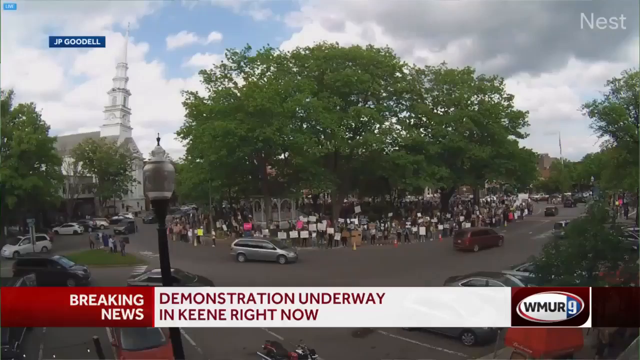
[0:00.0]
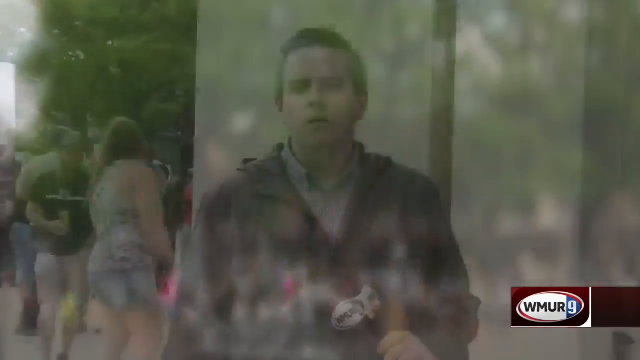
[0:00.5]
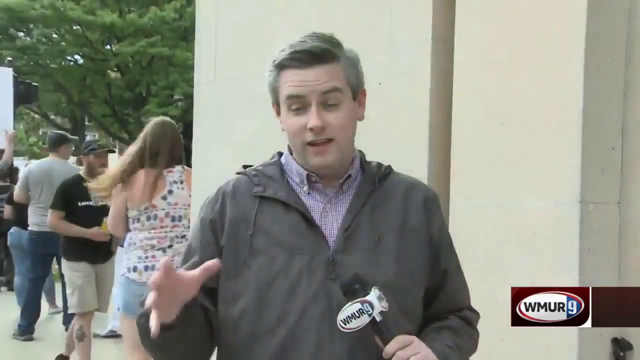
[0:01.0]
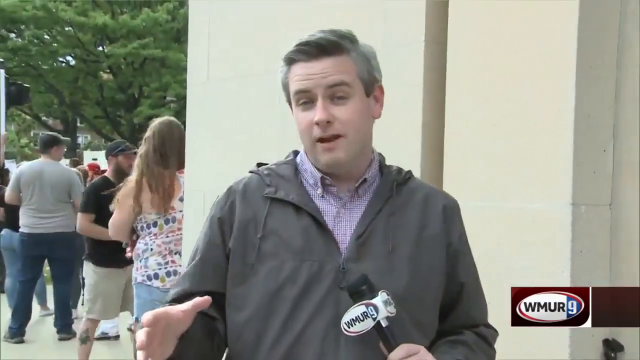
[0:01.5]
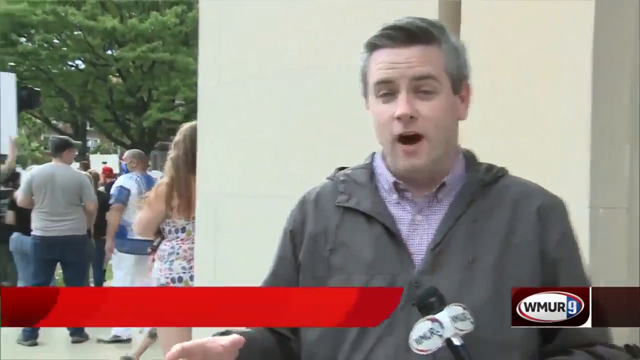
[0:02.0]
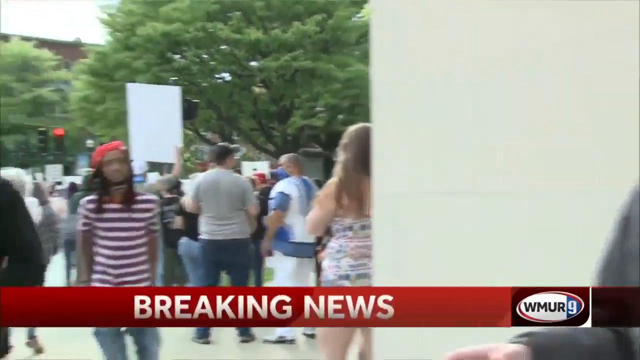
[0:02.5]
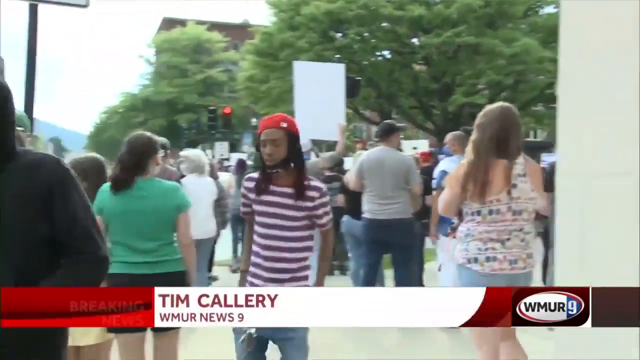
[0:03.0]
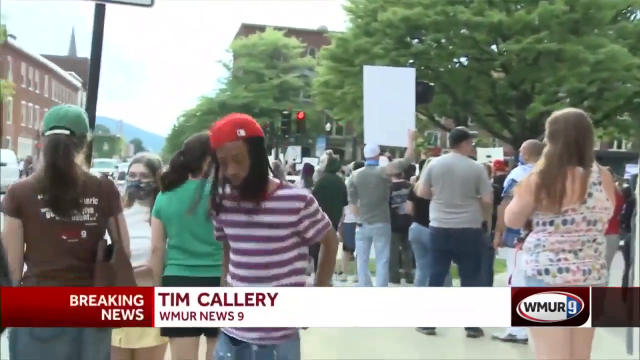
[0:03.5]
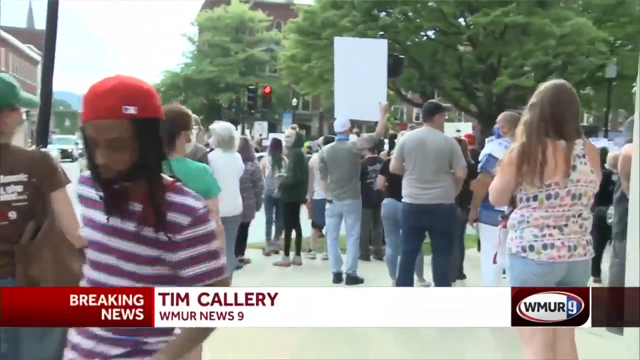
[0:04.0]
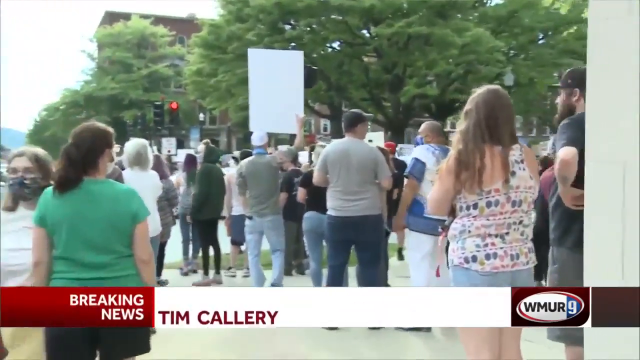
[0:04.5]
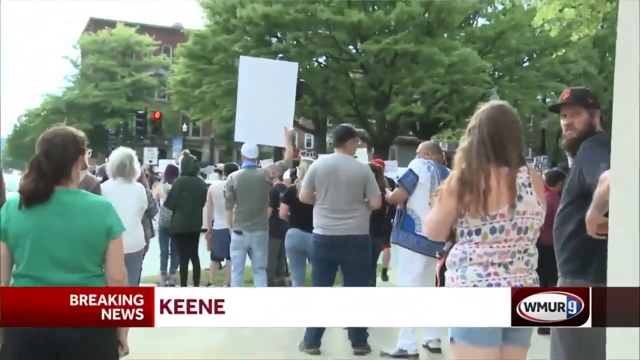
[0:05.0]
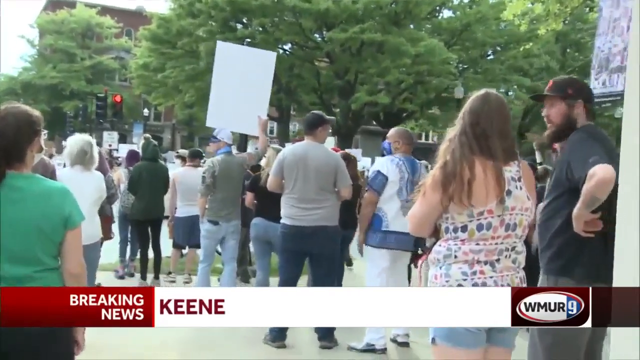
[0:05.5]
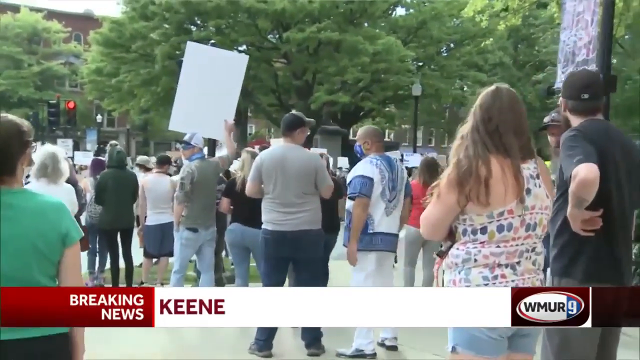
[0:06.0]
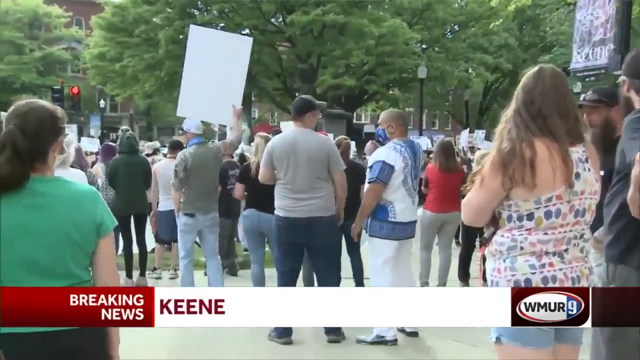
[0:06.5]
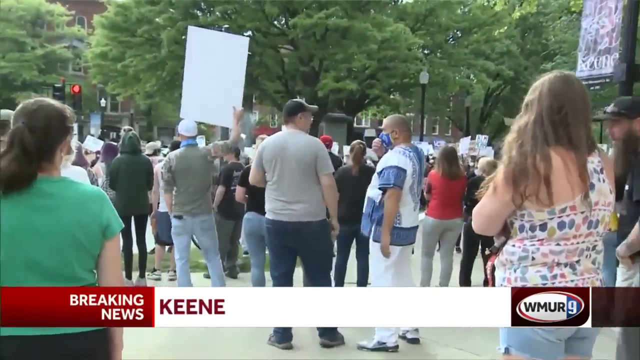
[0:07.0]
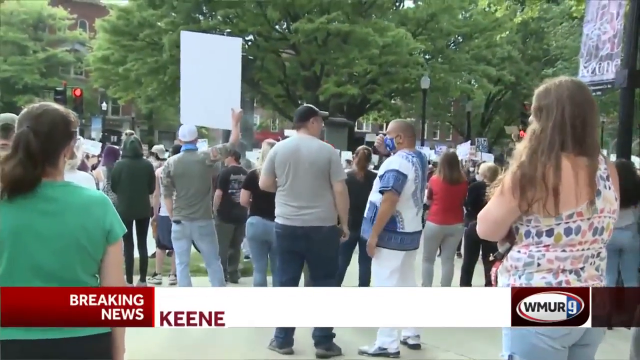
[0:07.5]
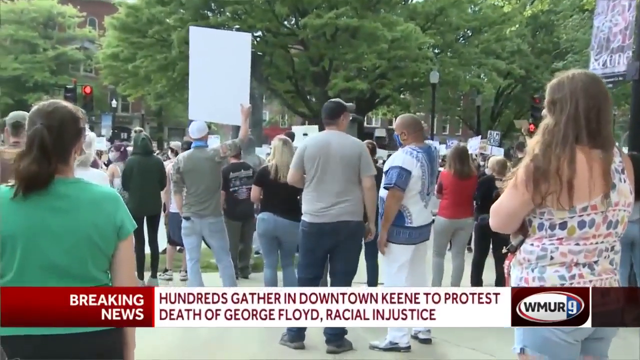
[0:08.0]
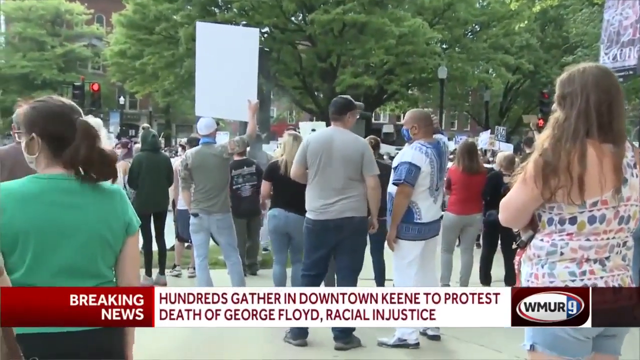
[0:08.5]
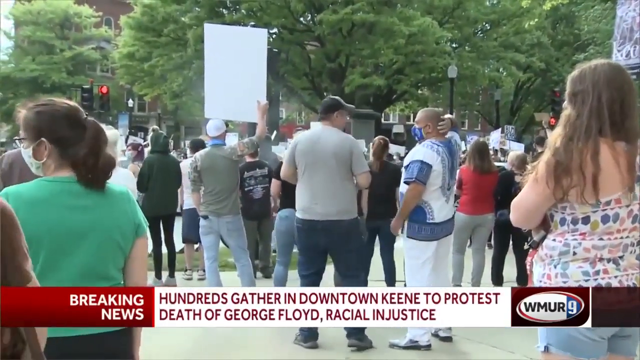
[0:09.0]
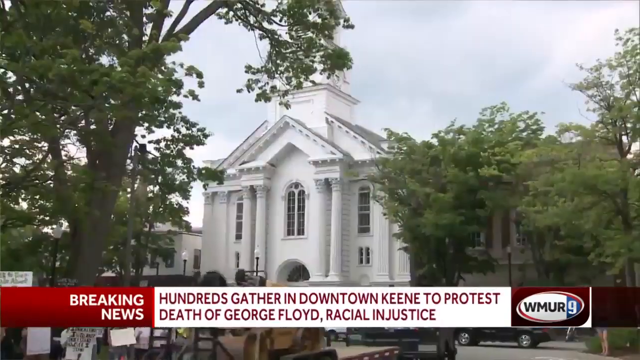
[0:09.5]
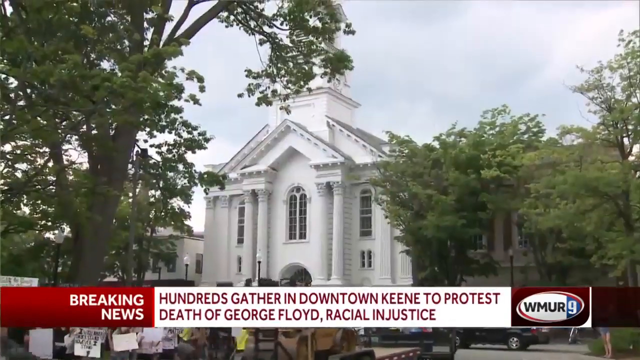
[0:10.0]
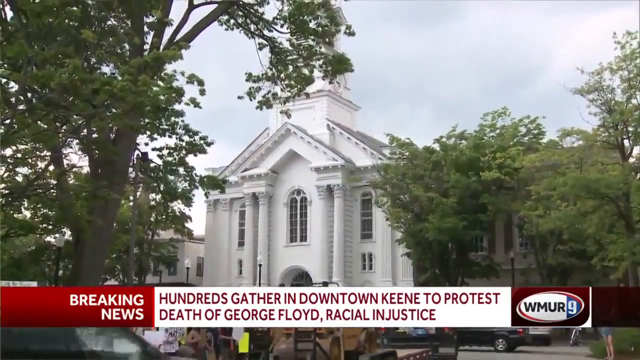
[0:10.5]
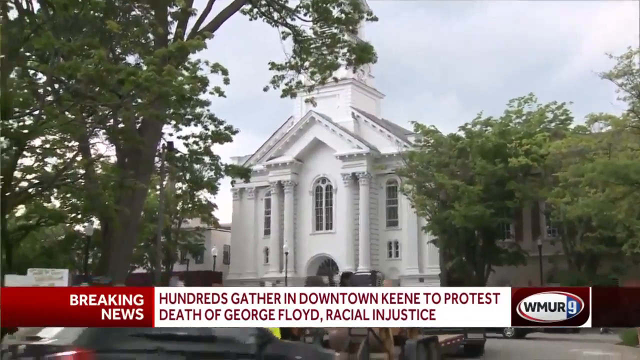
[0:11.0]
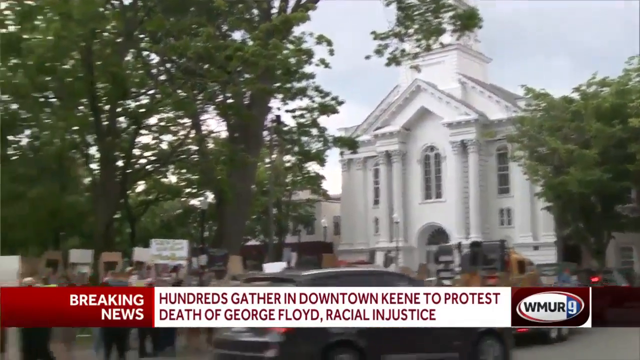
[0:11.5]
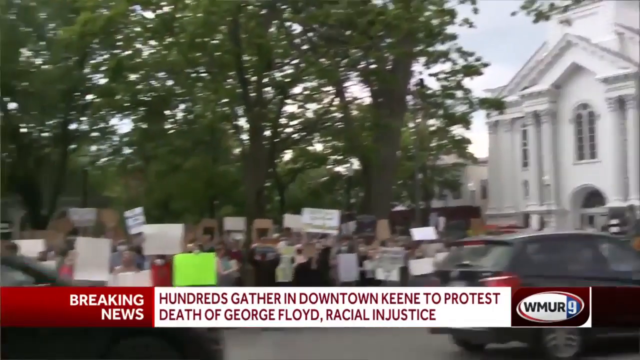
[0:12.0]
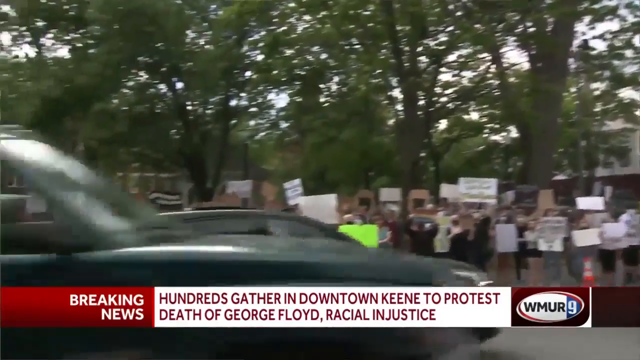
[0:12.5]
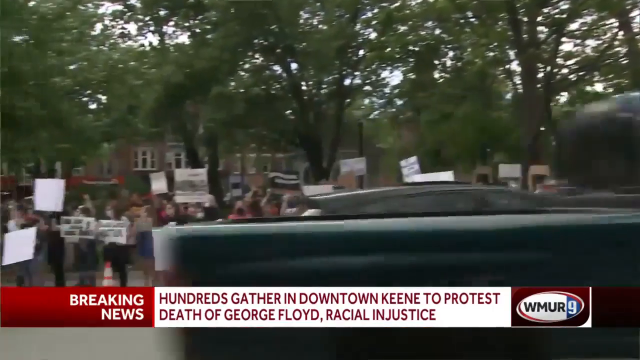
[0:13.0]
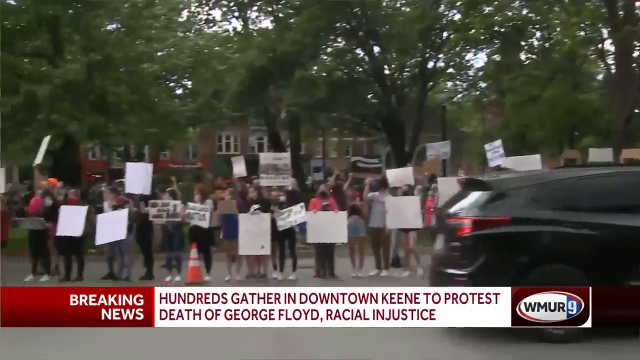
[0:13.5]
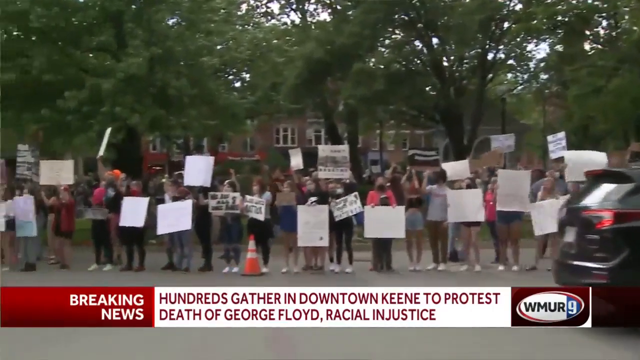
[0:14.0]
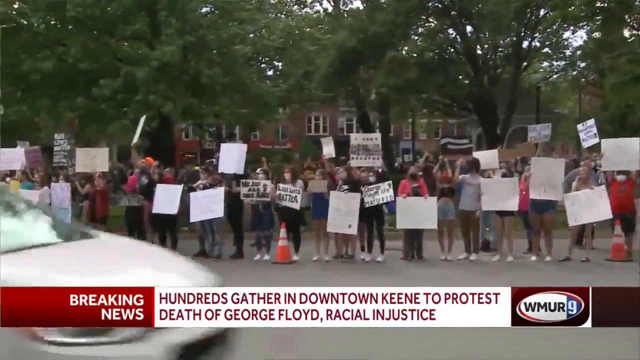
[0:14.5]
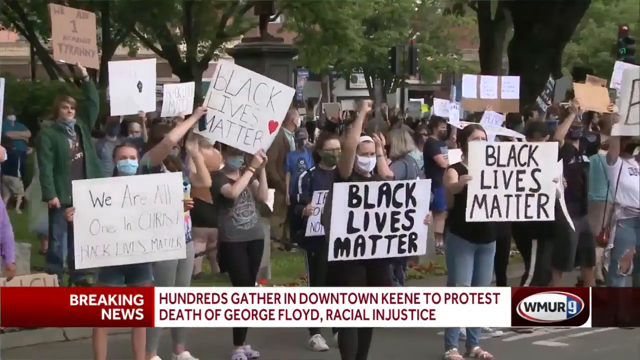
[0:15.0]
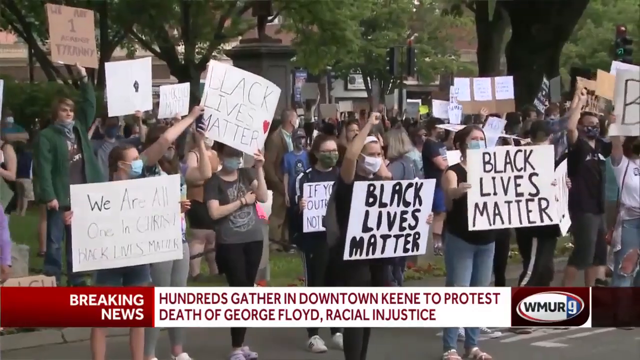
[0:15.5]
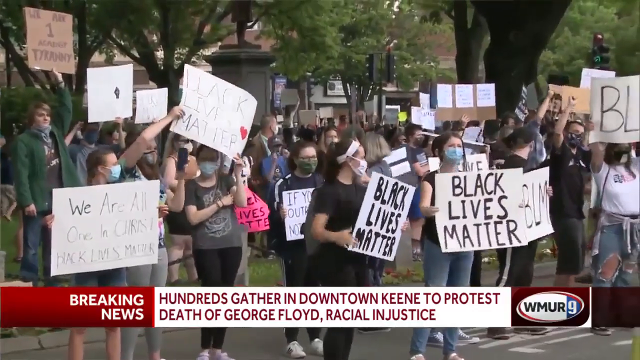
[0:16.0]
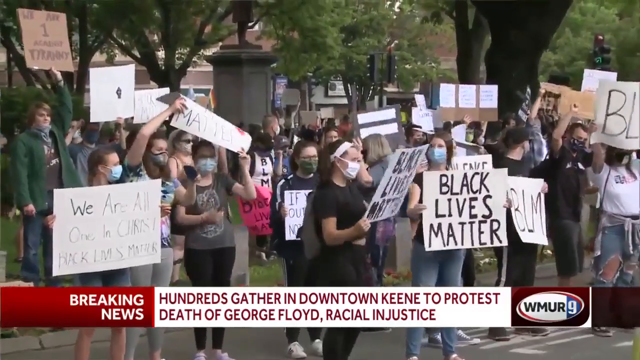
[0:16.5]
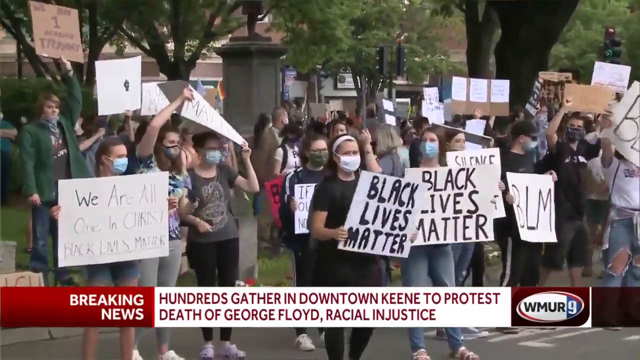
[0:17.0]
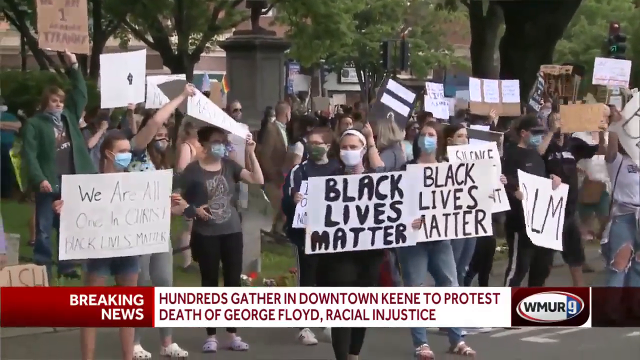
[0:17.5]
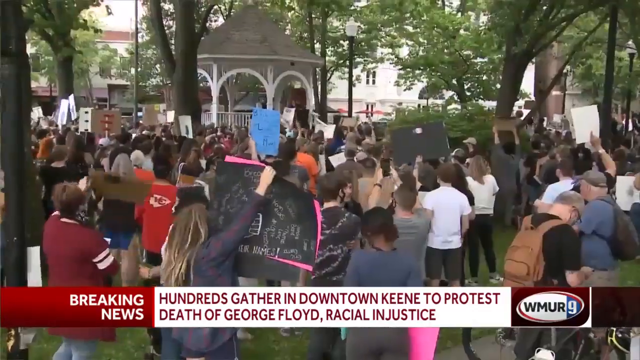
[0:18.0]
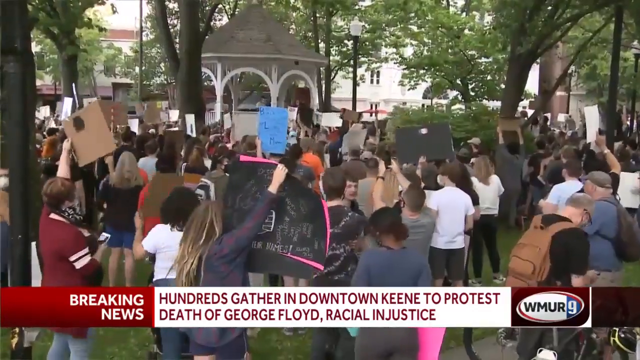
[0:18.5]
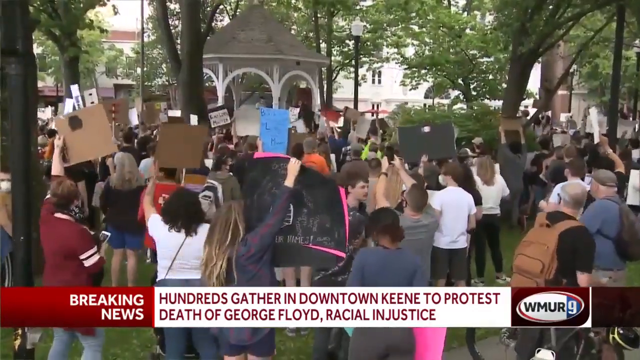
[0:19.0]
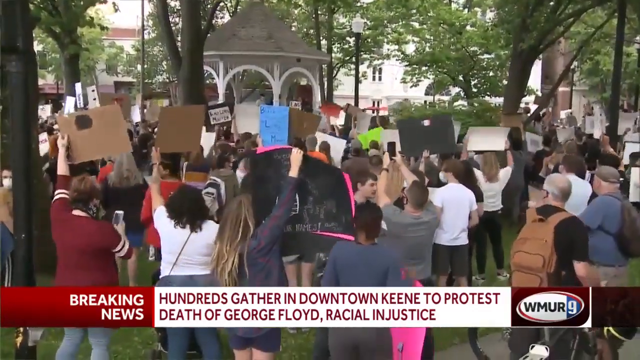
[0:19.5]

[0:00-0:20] A breaking news report from a news channel called WMUR shows on-screen text reading "demonstration underway in king right now" and "breaking news," with more text in the top right and top left corners. Vehicles pass back and forth in the streets, and nearby there is what looks like a church with a large building. Protesters holding white mufflers protest on the roadside.